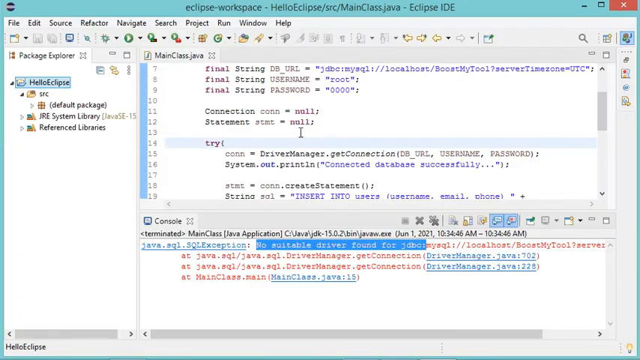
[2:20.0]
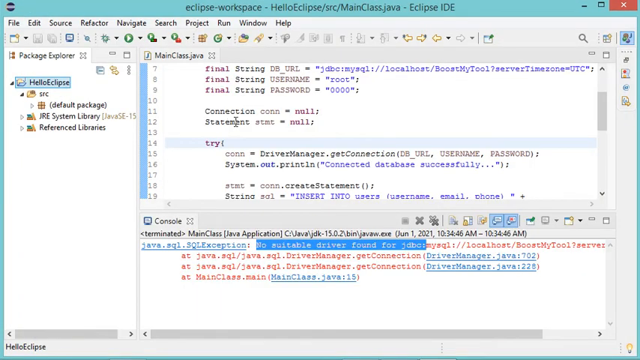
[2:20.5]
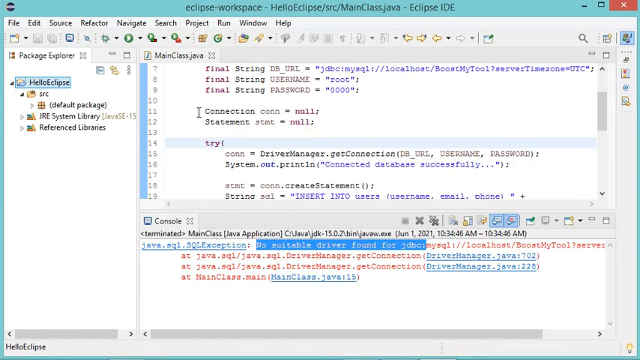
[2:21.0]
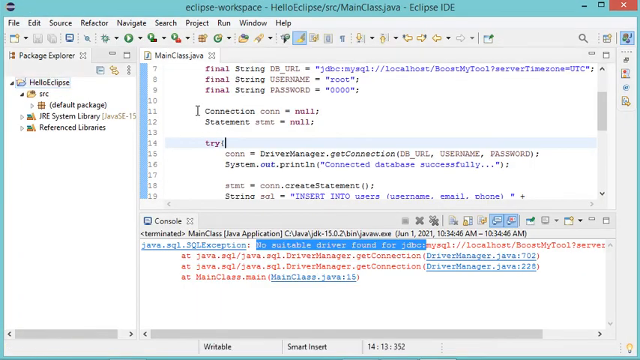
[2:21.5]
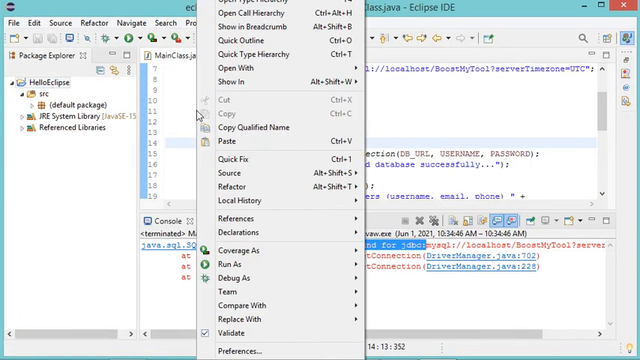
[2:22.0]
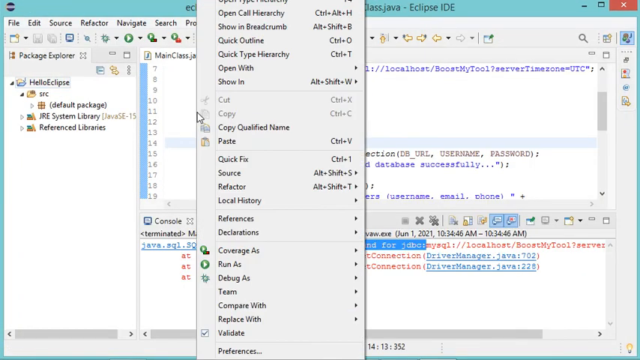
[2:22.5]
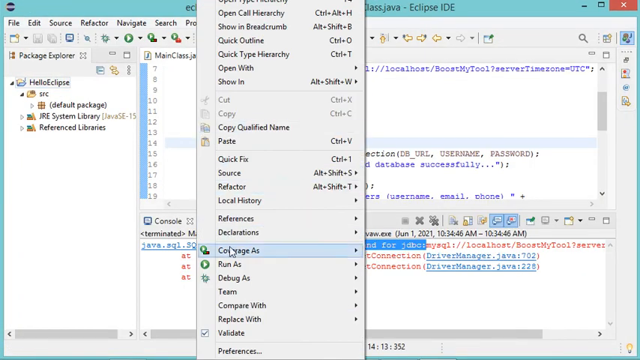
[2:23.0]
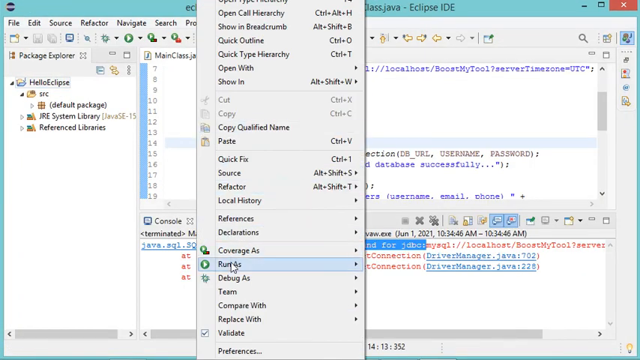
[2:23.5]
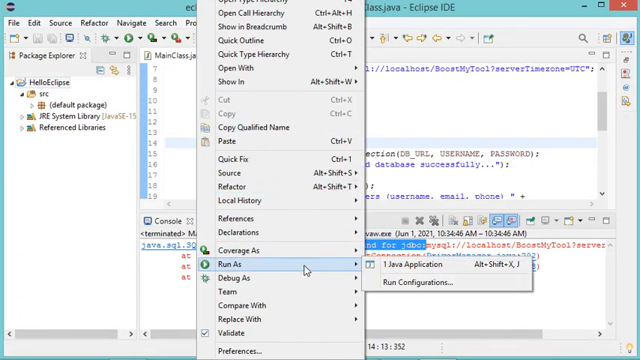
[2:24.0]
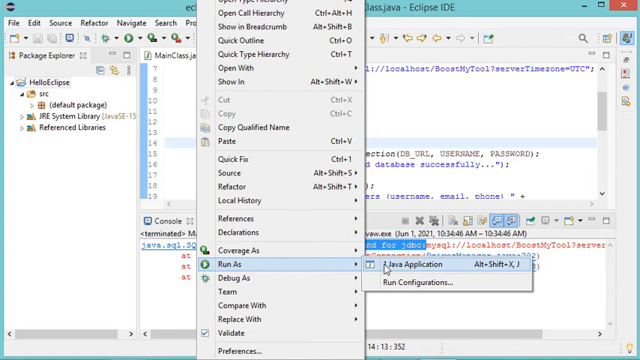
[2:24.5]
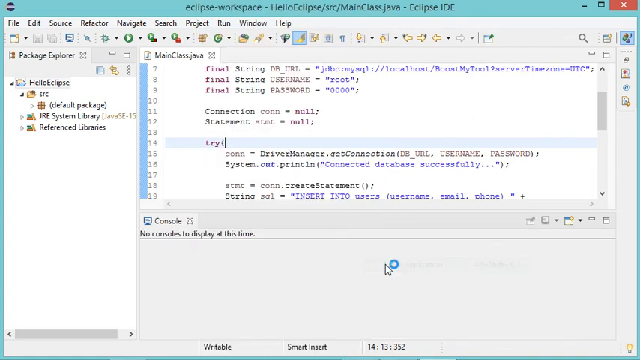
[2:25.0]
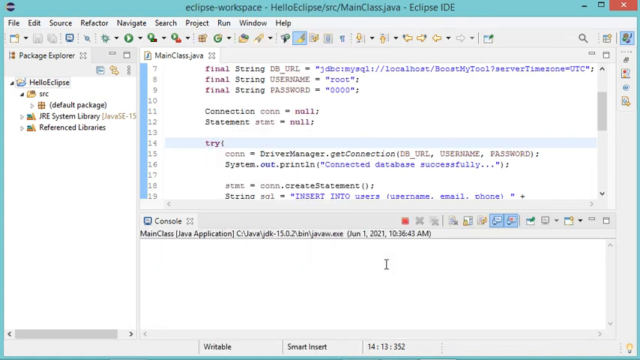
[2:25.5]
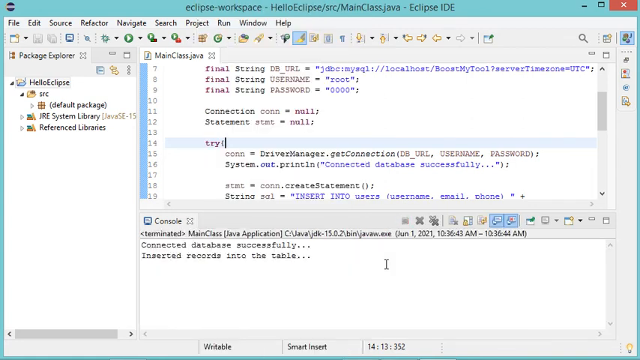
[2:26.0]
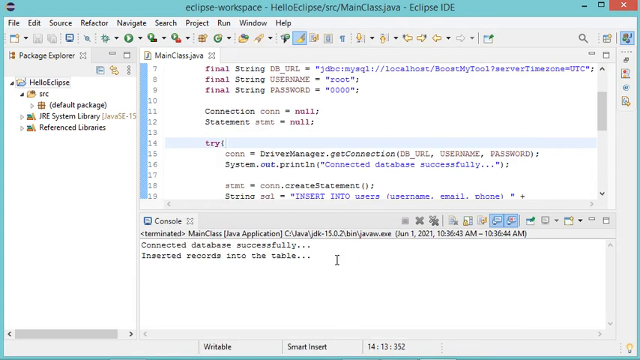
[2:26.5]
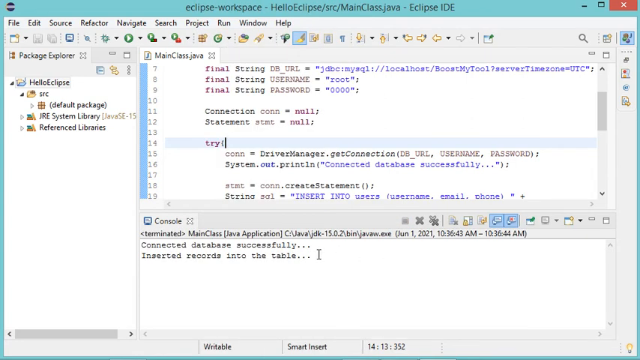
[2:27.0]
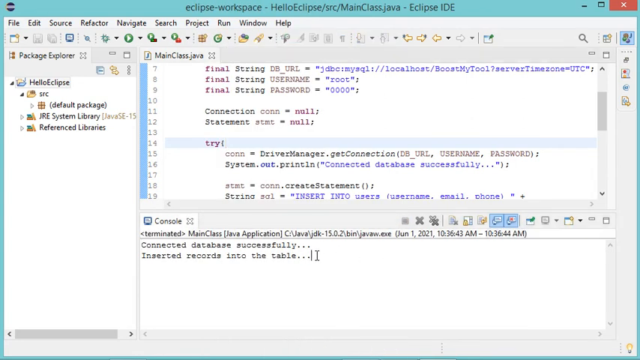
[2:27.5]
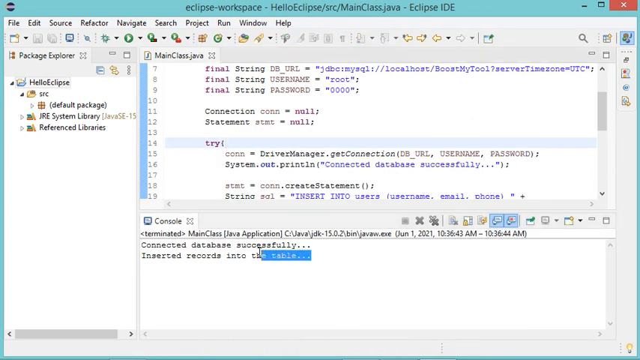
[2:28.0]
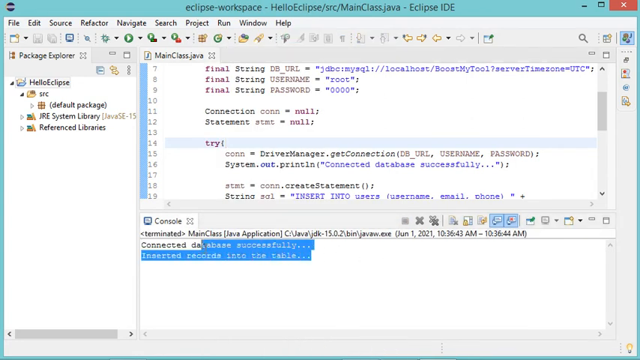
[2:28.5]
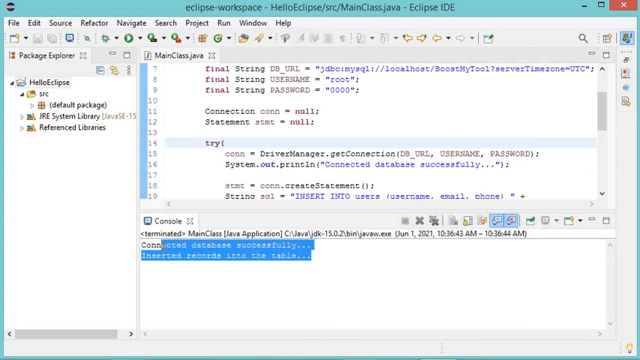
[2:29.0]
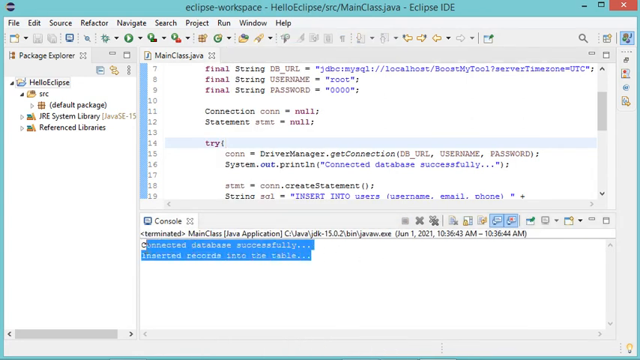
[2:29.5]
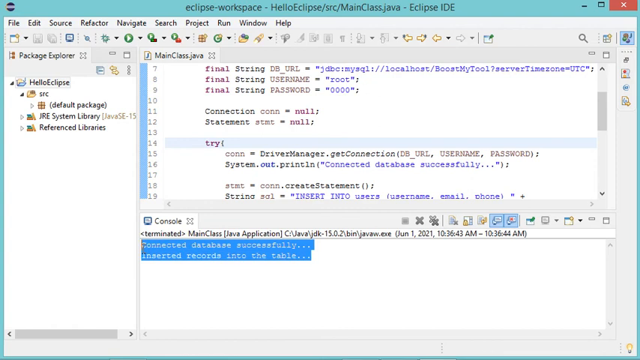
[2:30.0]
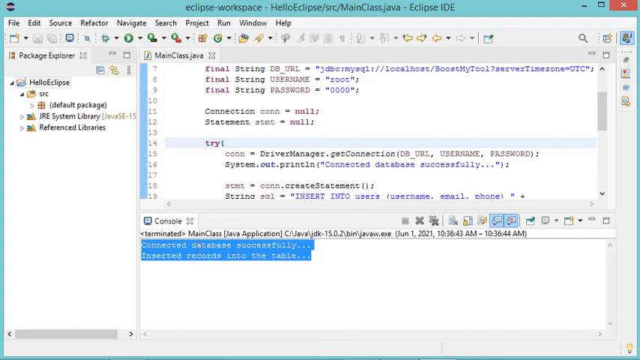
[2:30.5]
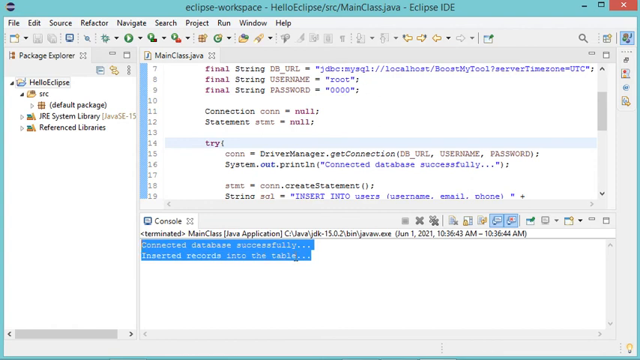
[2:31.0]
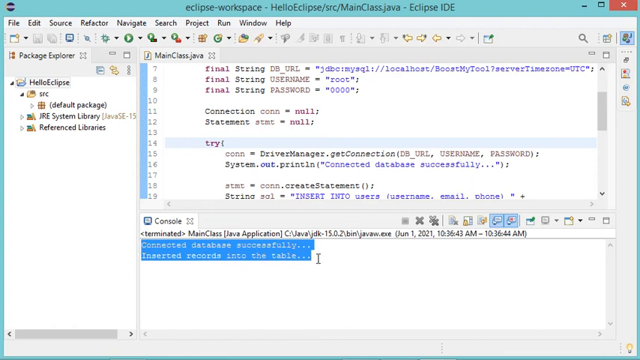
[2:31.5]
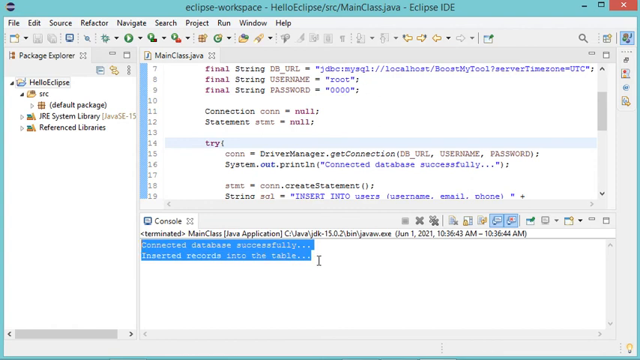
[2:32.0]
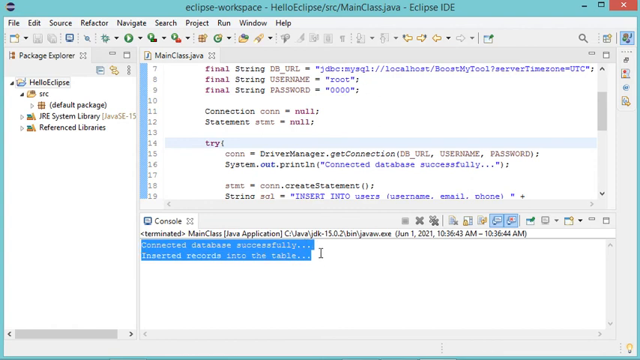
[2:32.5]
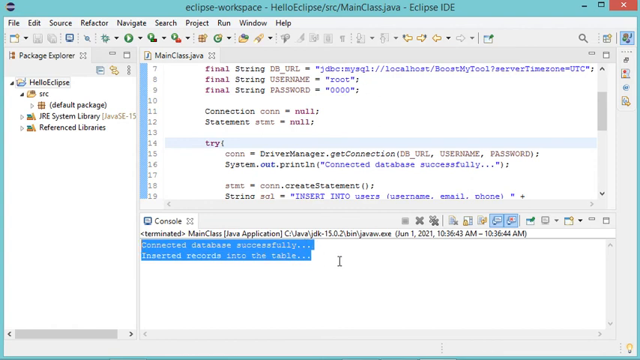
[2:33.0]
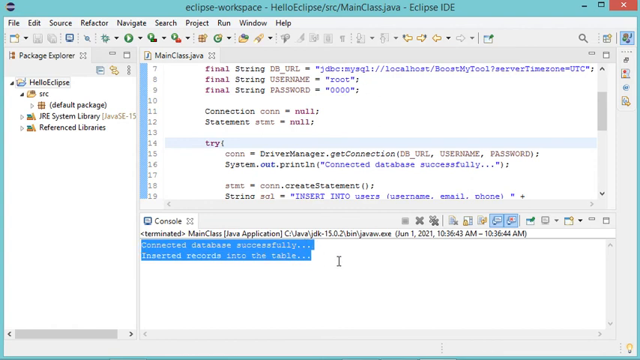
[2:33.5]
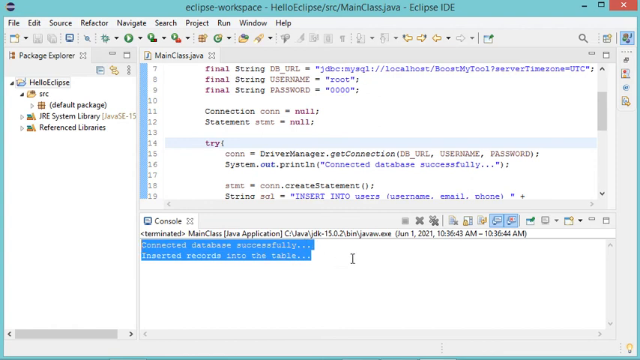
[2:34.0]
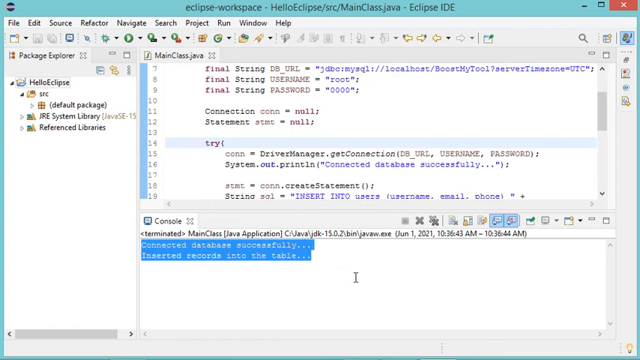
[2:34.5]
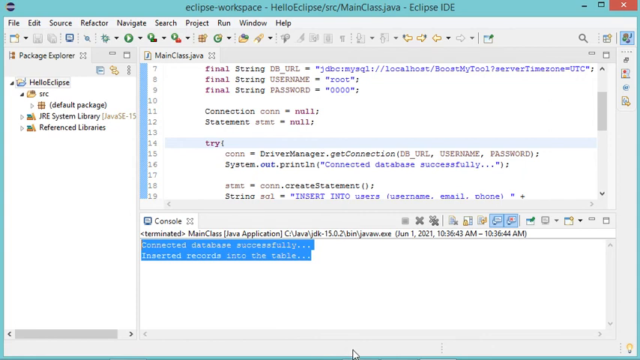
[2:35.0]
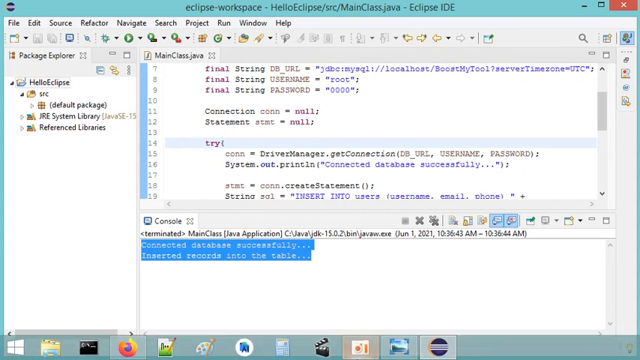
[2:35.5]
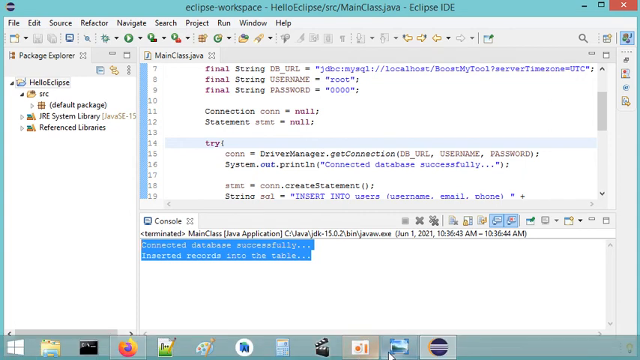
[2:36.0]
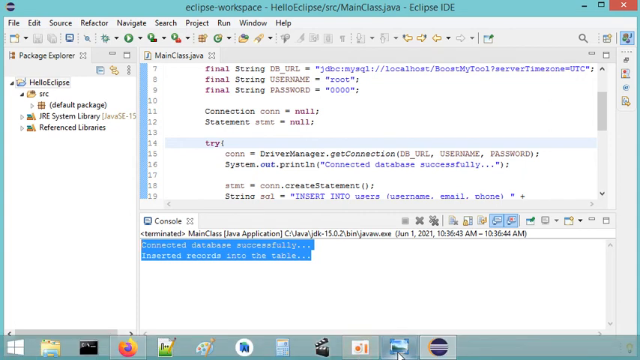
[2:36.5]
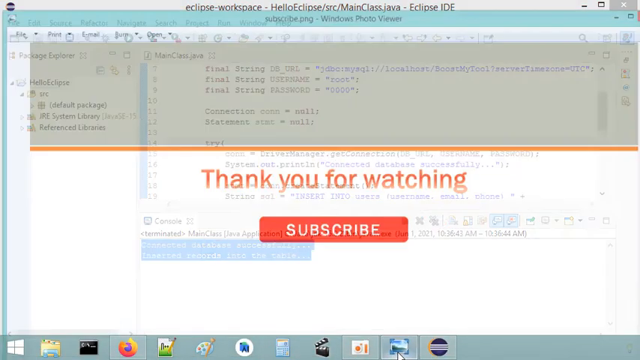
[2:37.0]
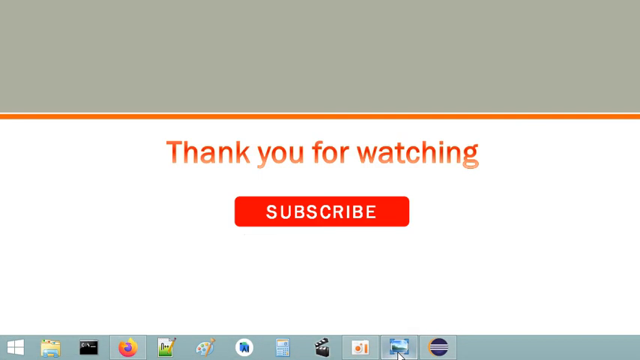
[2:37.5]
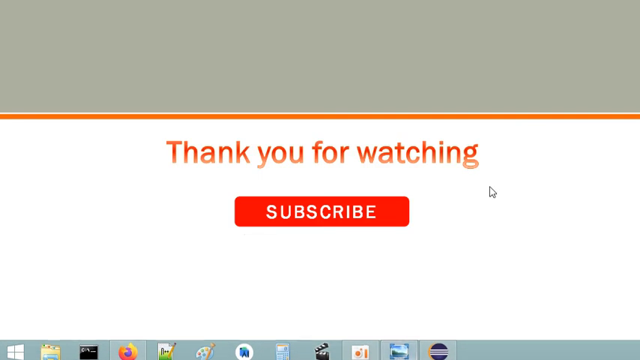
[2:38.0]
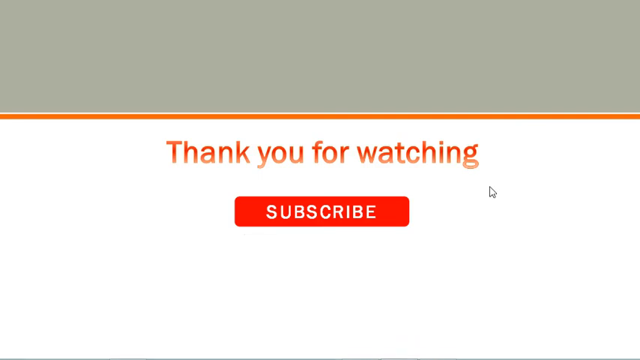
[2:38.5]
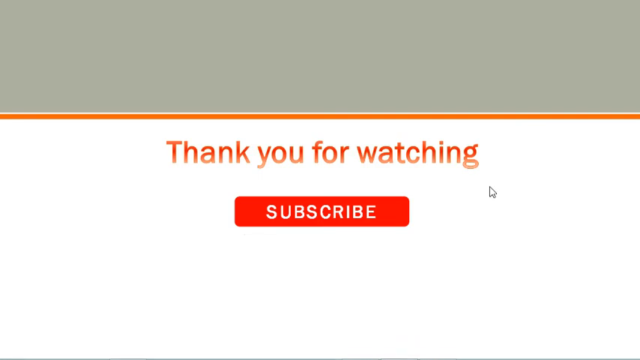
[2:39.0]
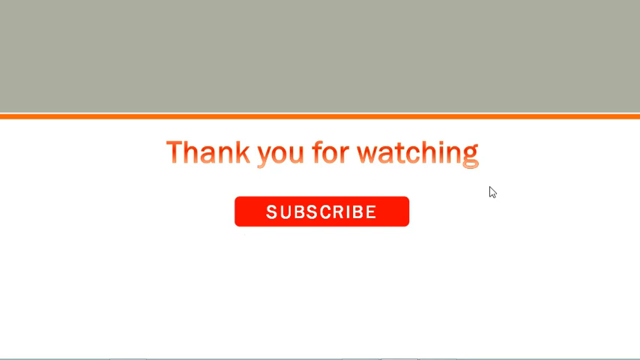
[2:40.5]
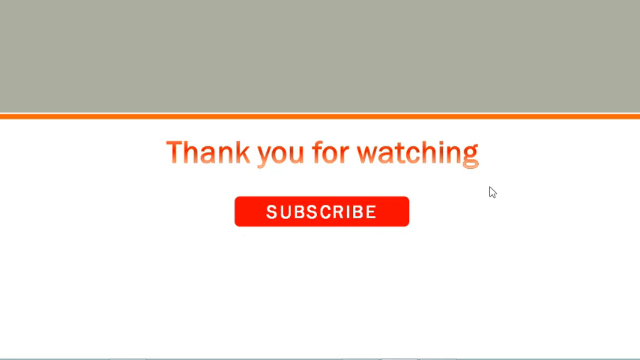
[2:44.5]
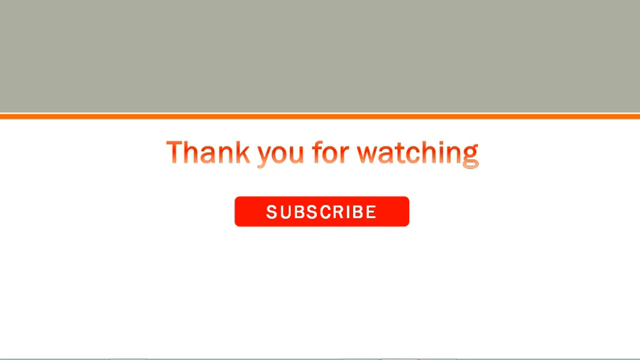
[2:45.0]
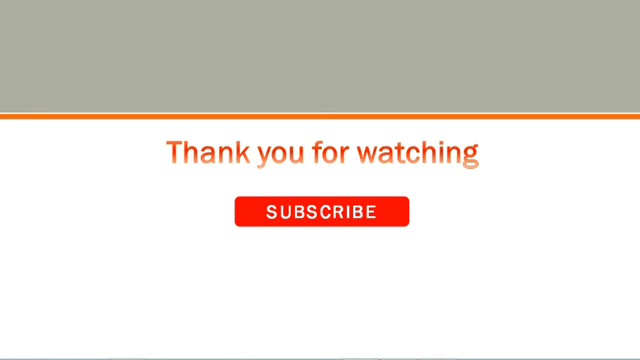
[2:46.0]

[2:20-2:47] An Eclipse workspace shows Hello Eclipse and Java code. The user kind of highlights over "no suitable driver found for JDBC", then moves the mouse to the main class area and opens some settings. They go to run as, then to "one Java application" and click it. The console pops up with text reading "connected database successfully inserted records into the table", and the user kind of highlights all of that text, then just moves the mouse around the screen. Next comes a screen with a gray bar at the top and an orange line underneath, with red-orange text reading "thank you for watching" and a red button with white text reading "subscribe". The mouse moves around the screen a bit.